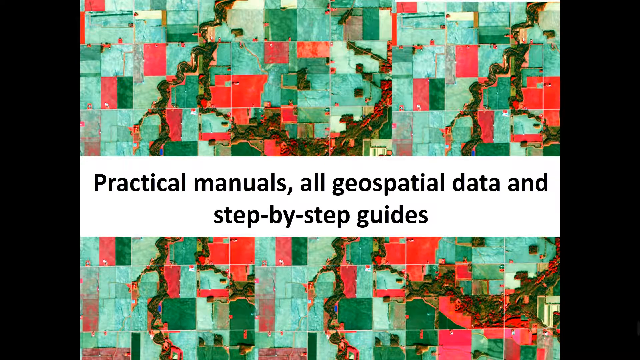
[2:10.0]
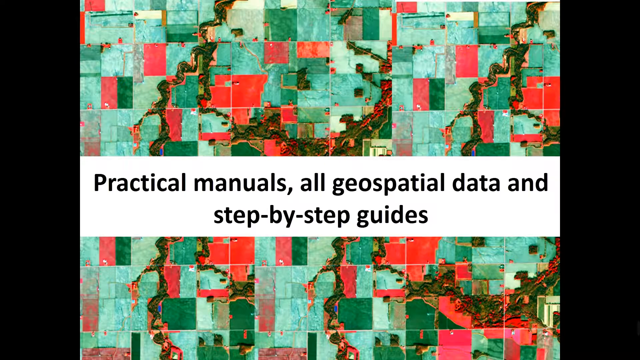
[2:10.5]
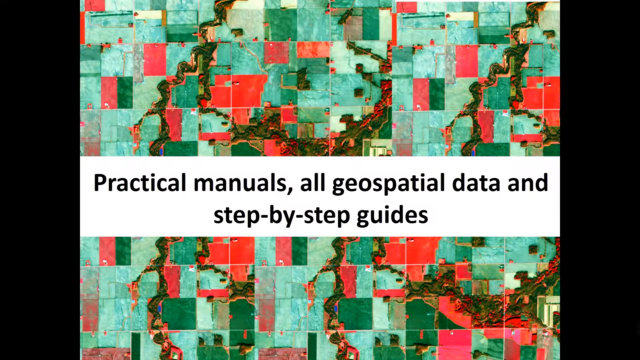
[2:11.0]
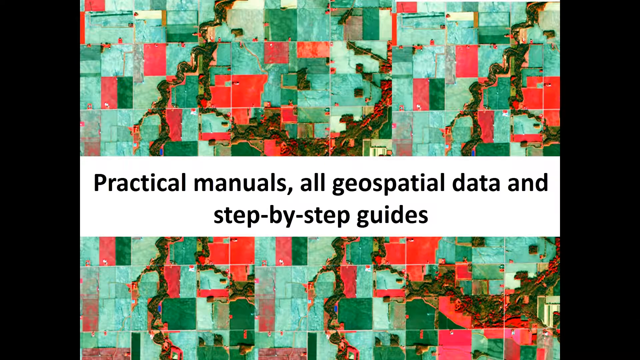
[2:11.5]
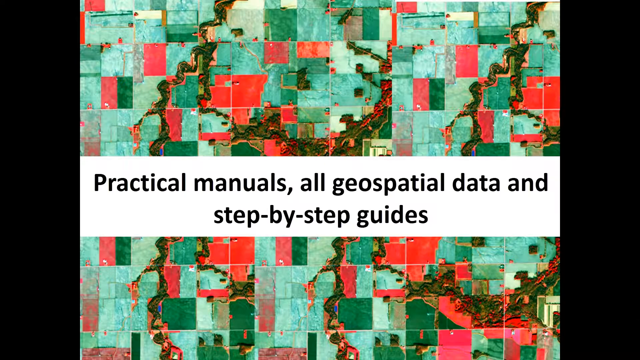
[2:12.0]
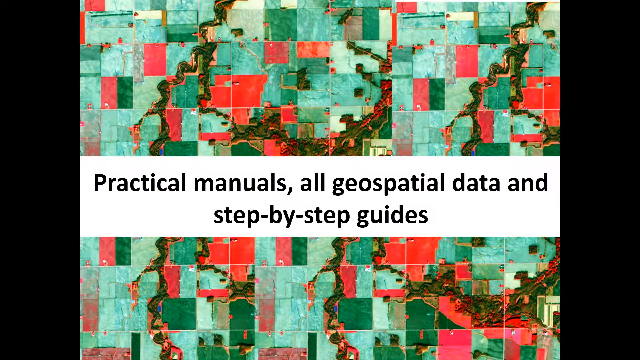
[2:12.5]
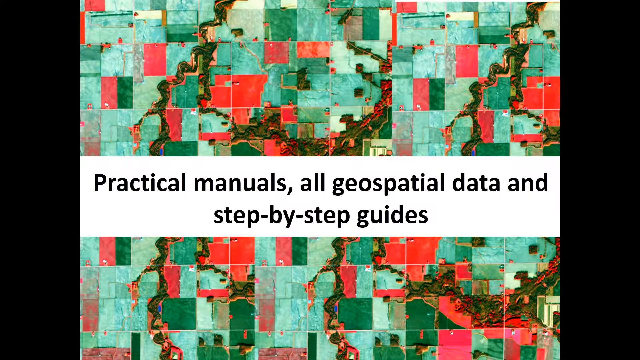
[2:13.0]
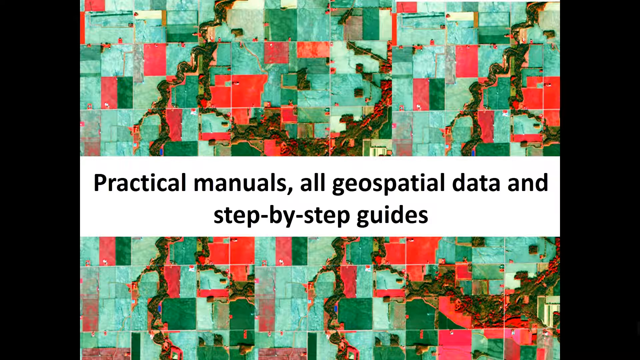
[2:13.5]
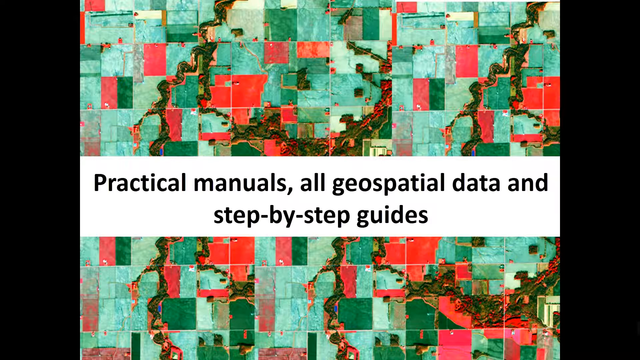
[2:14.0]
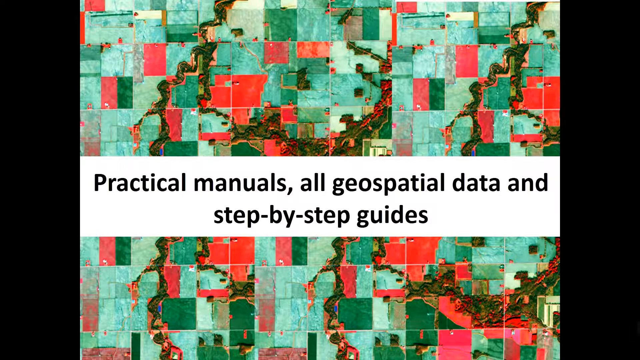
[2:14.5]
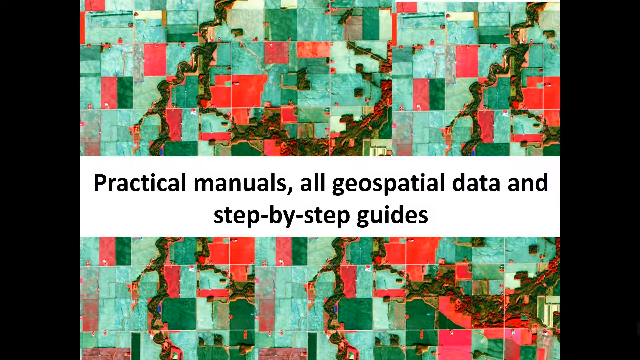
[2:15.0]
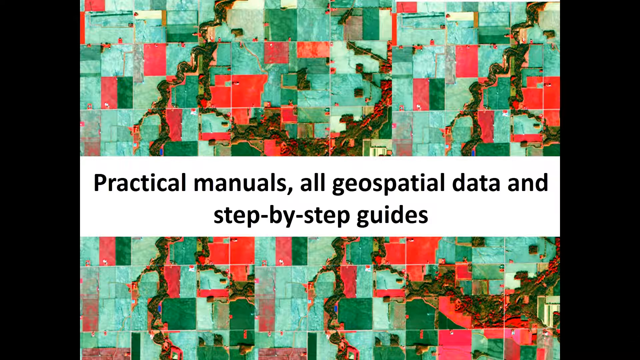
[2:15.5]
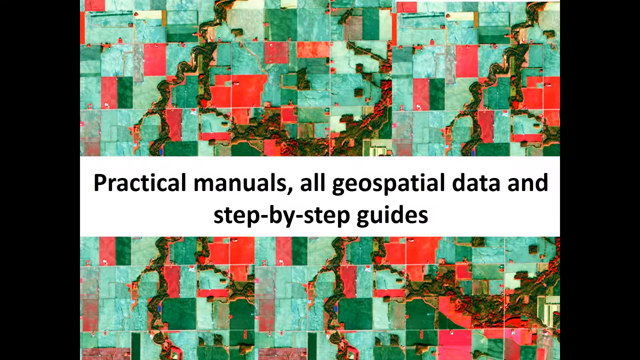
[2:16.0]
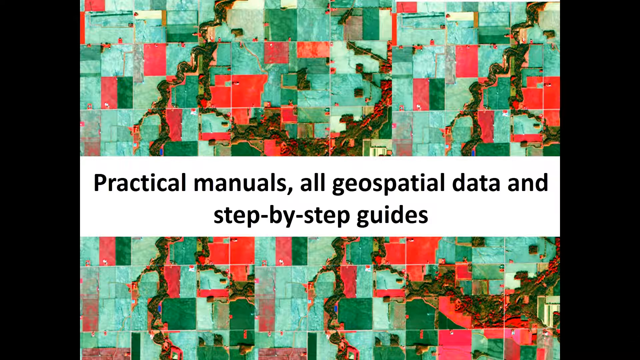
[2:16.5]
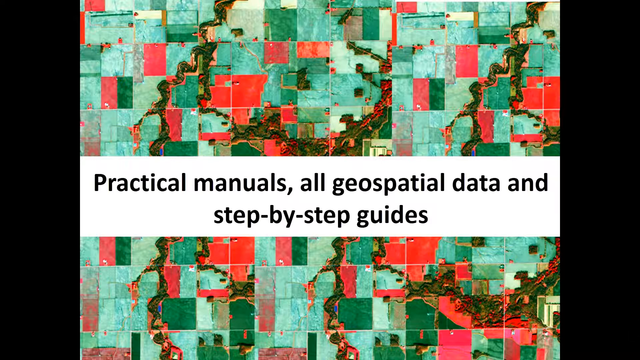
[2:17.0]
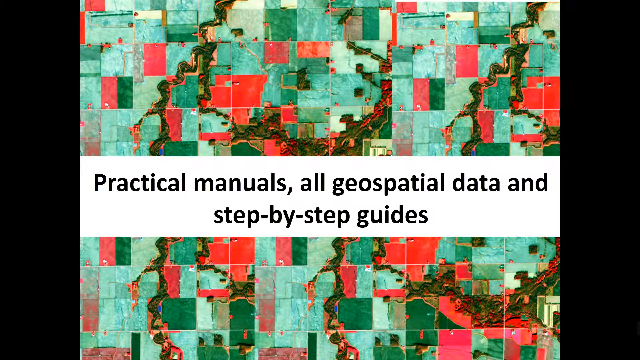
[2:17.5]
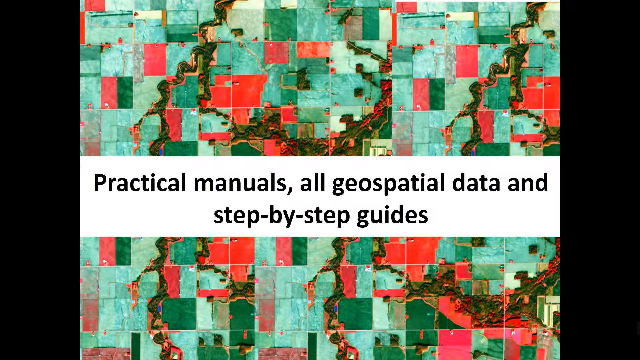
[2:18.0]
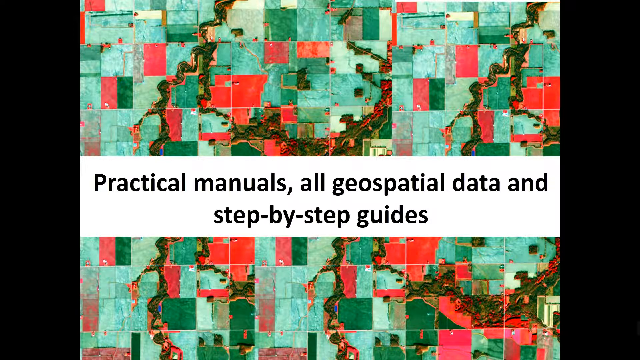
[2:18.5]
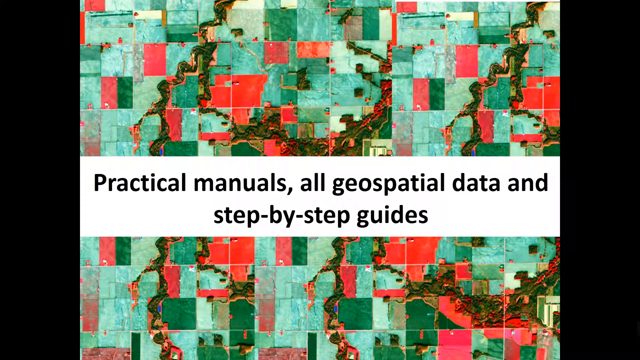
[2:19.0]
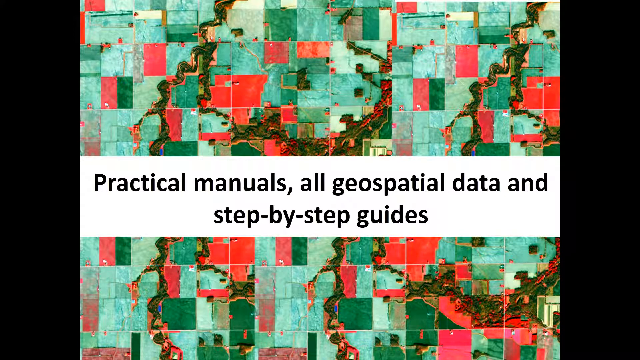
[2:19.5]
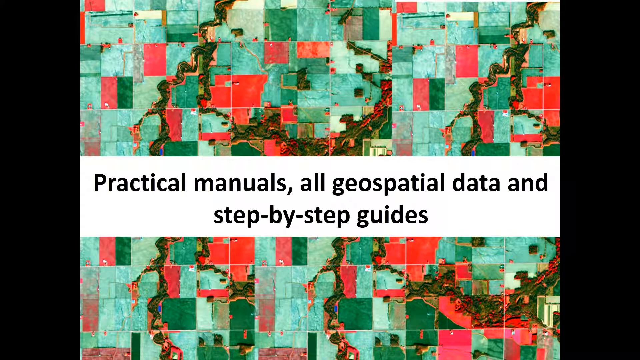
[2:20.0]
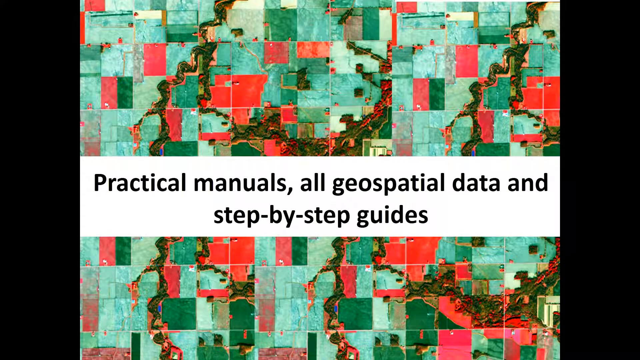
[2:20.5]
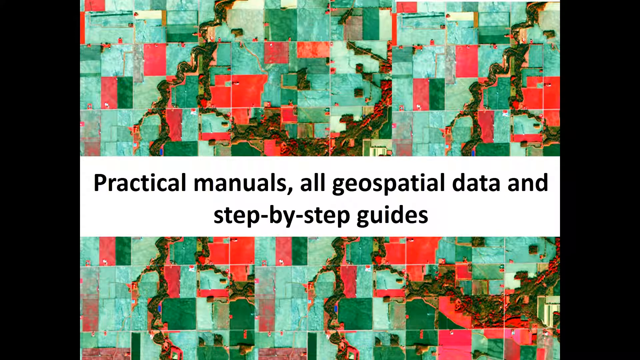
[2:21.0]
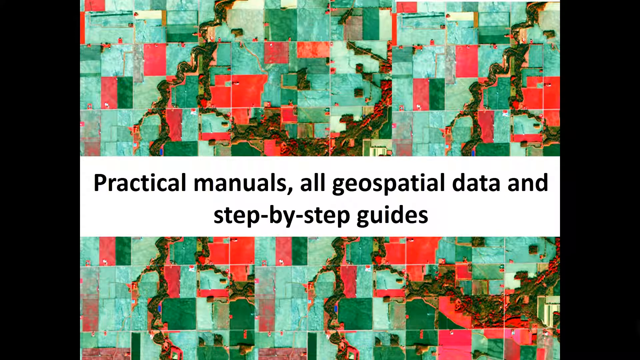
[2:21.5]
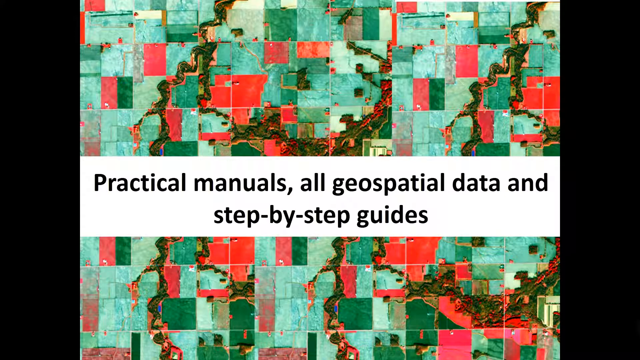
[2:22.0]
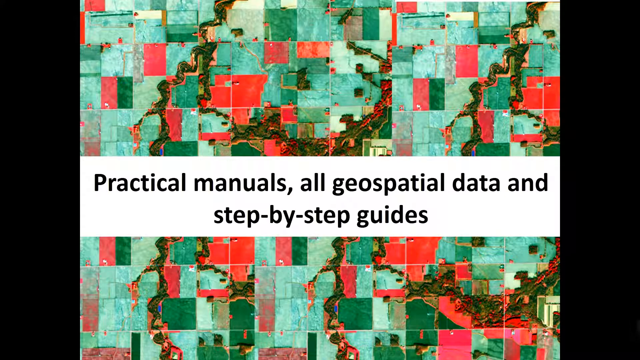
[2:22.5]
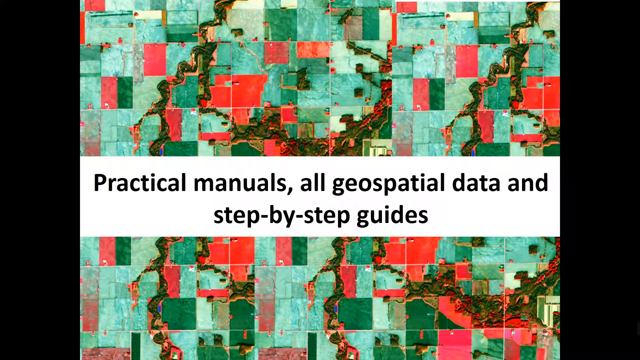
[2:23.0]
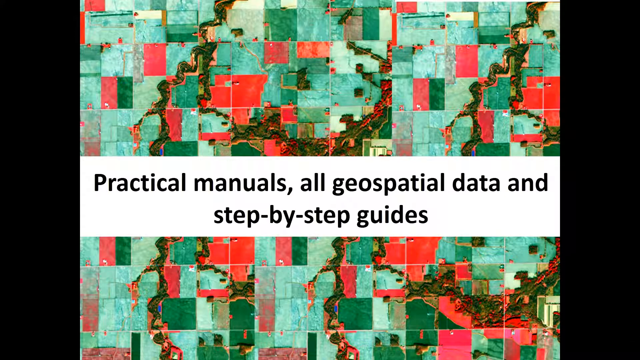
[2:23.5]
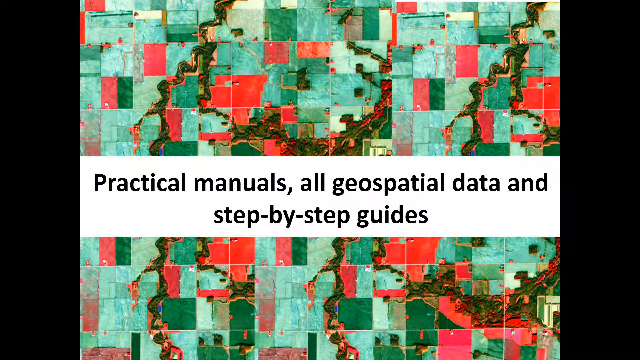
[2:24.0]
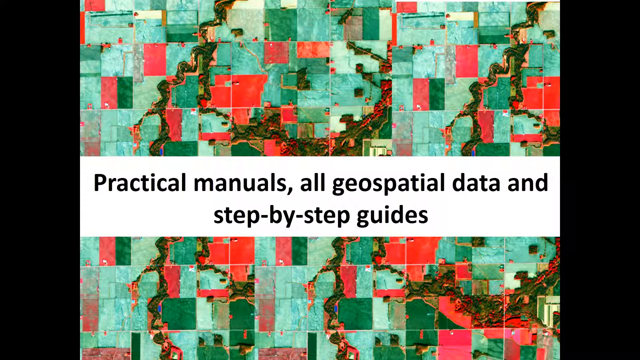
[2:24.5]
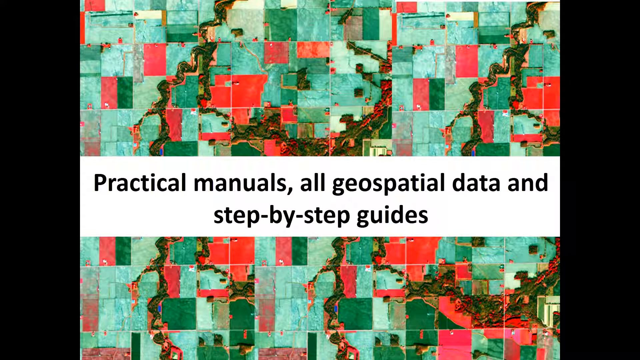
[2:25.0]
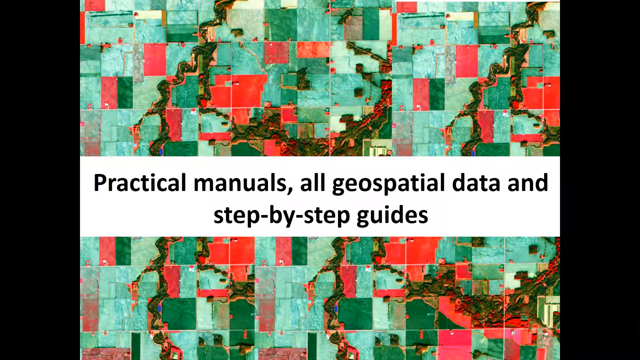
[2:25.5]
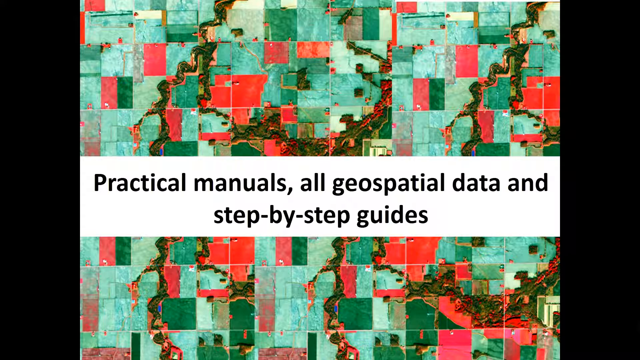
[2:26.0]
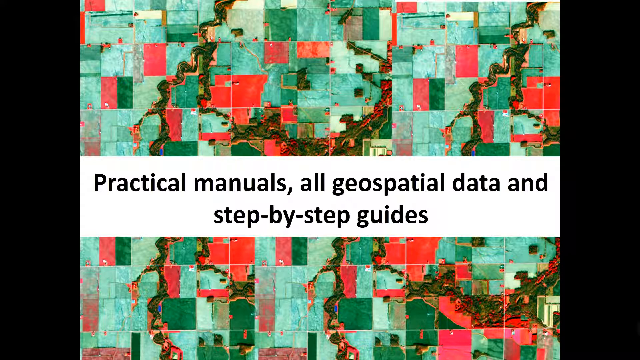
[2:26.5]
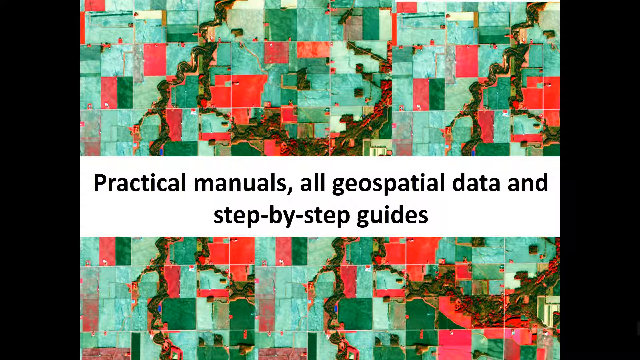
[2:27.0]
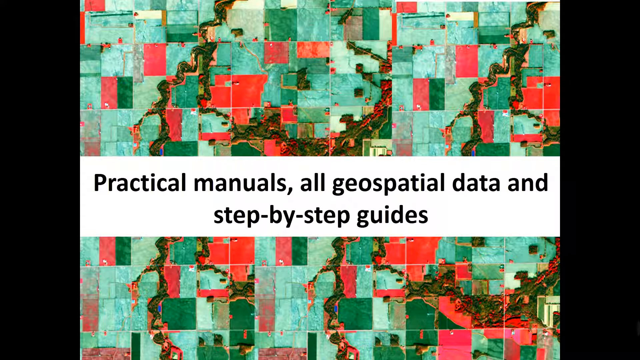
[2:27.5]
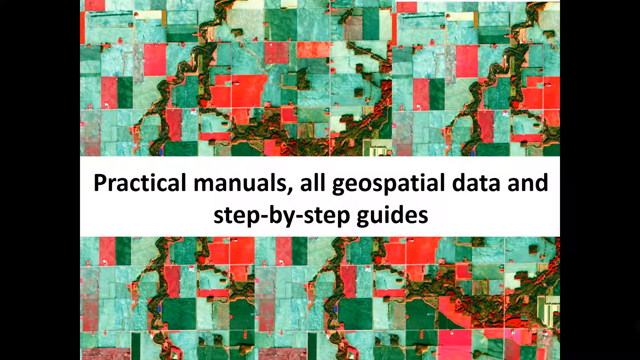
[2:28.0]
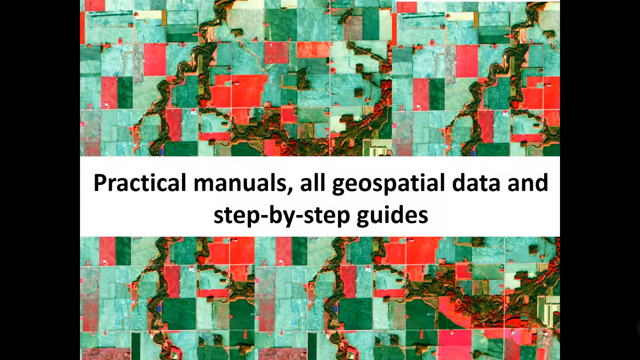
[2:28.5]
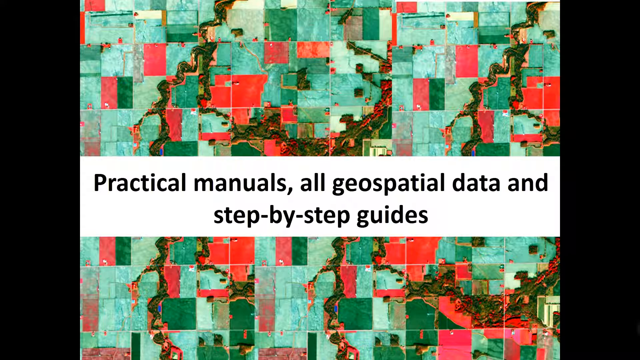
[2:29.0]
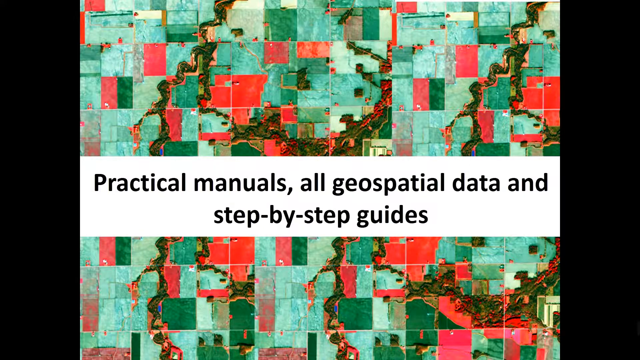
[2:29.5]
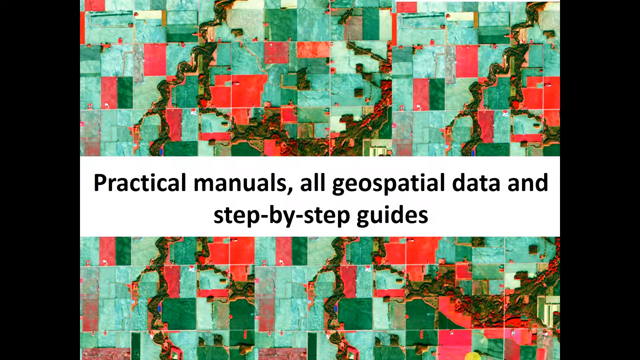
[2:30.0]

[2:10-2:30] The heading says "practical manuals, all geospatial data, and step-by-step guides," listing what is in the course. The only image shown is the original aerial view of a landmass filtered through the software, with different parcels of land in different colors that correspond to different meanings in some sort of legend.